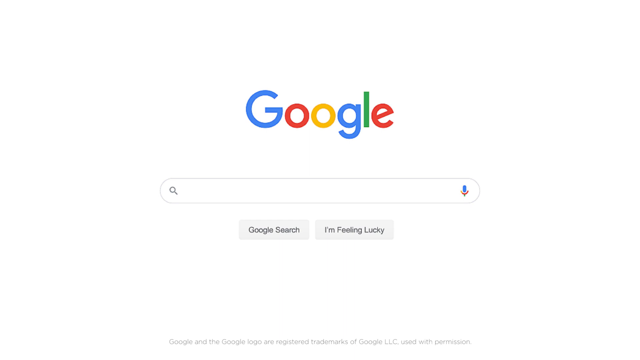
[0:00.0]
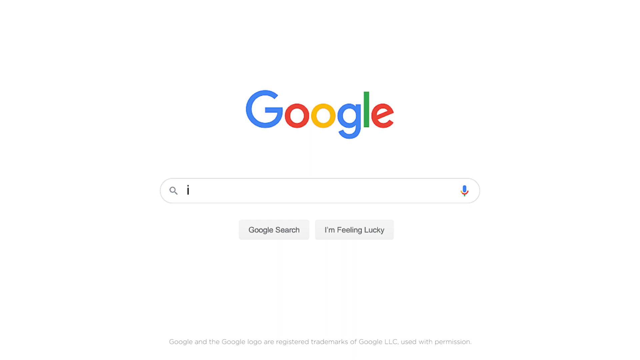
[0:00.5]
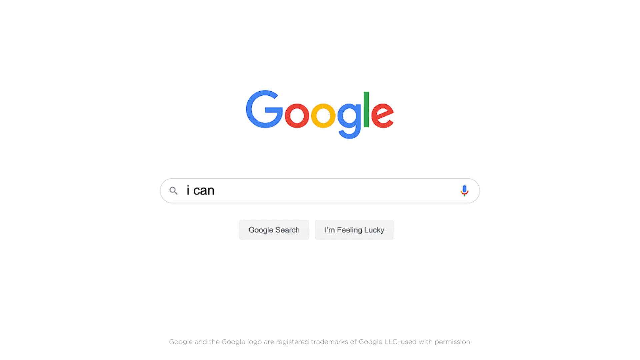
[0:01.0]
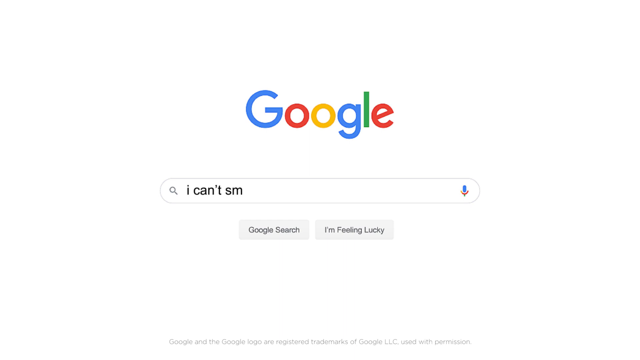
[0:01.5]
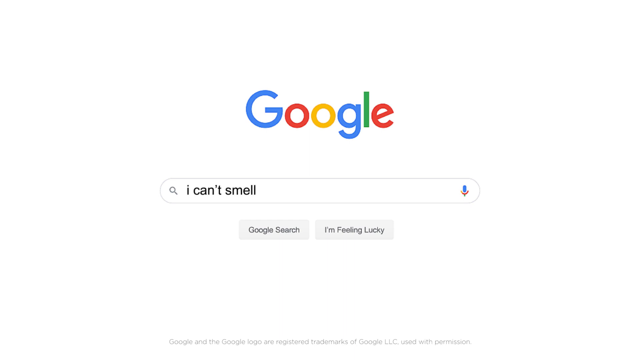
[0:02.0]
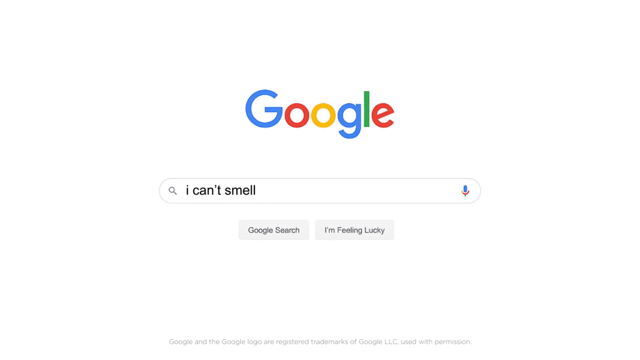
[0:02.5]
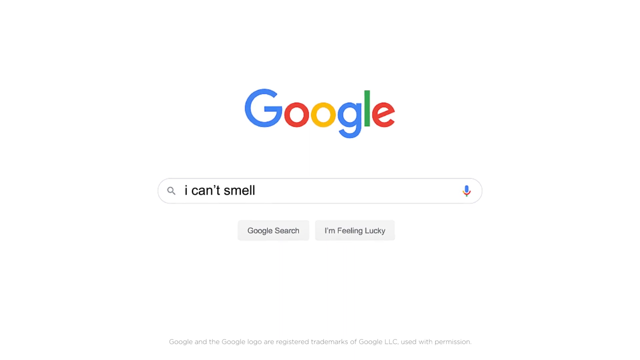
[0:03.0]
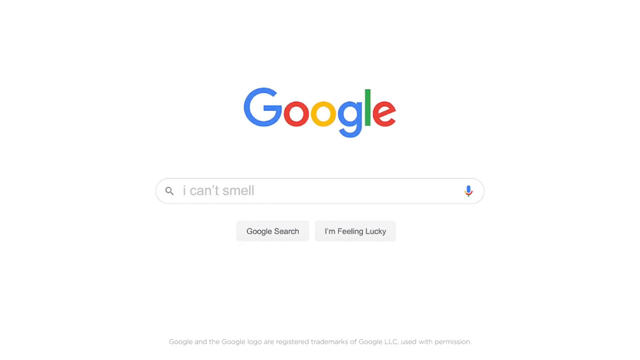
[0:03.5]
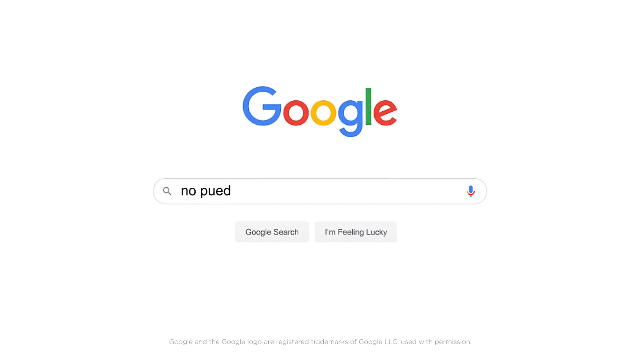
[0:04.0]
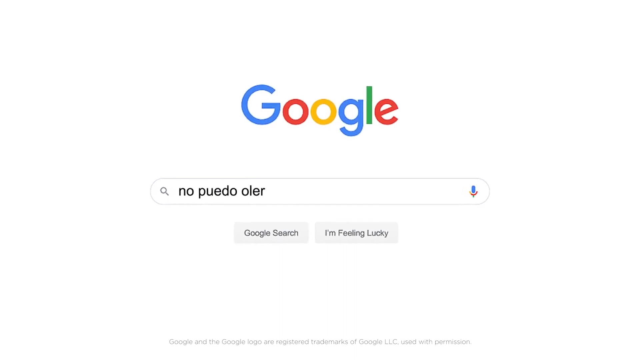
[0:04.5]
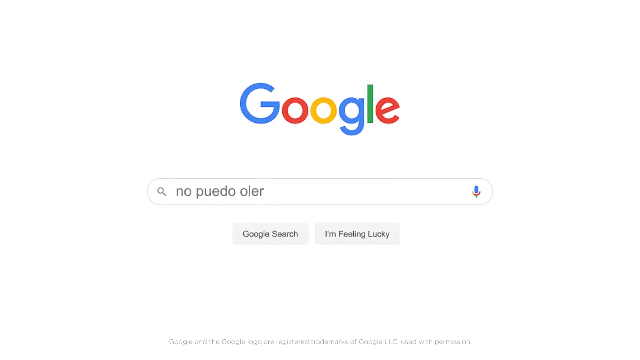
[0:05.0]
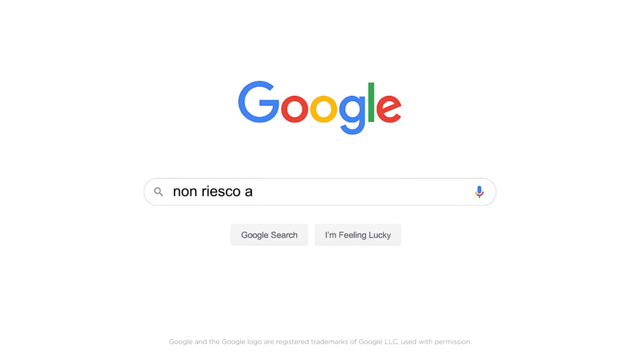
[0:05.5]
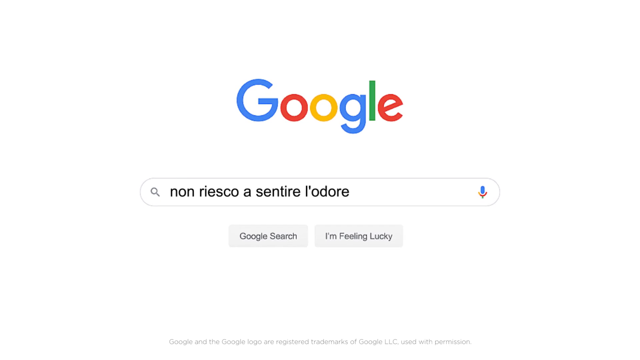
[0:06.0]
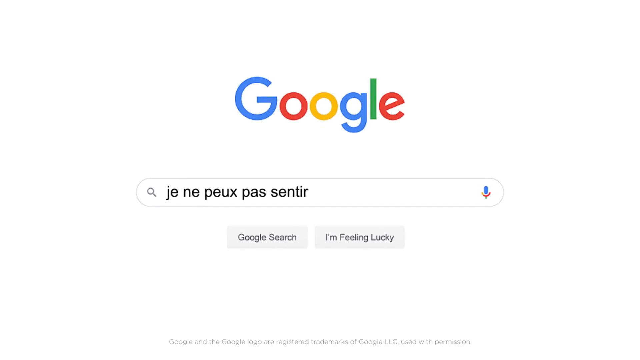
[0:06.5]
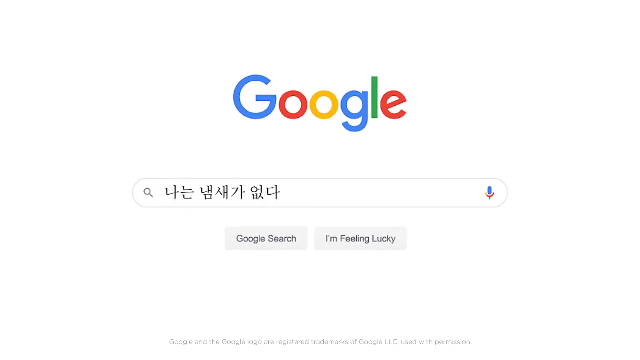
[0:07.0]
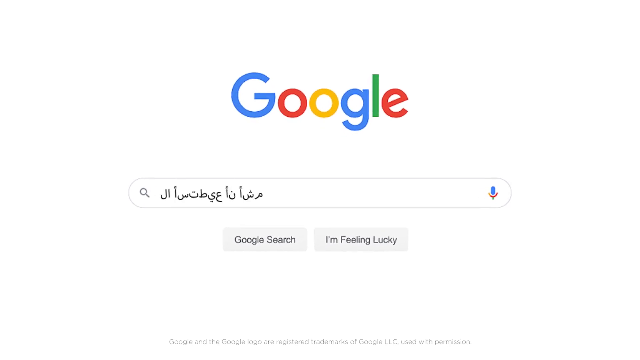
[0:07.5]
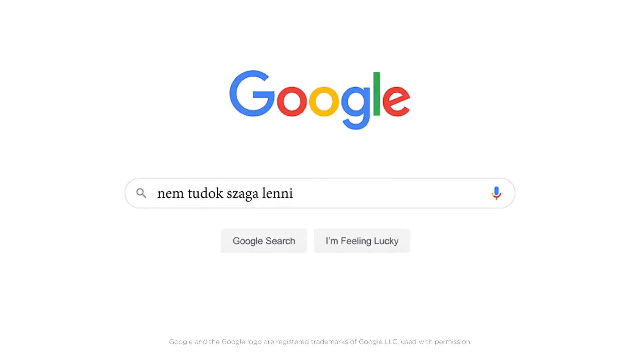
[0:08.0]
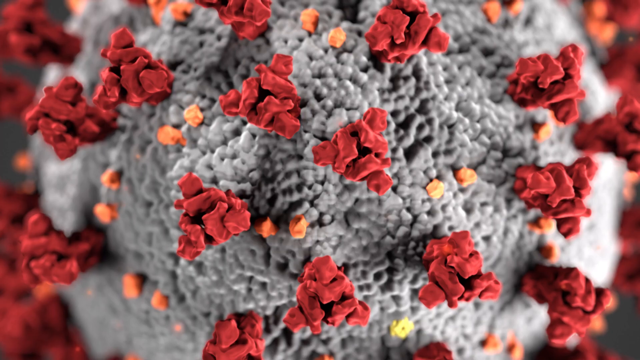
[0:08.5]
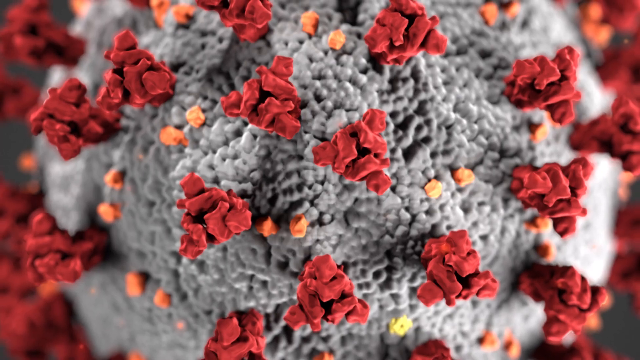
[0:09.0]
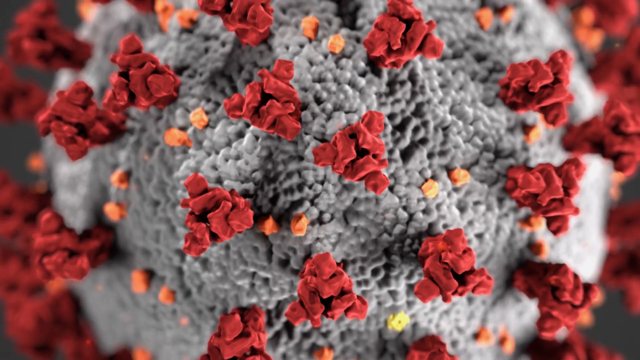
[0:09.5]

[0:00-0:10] A white screen shows the word Google in the middle. The capital G is blue, followed by a small red letter, the small o is yellow, the small g is blue, the small l is green, and the small e is red. Beneath it is a long rectangular search bar with a small magnifying glass on the left side and a small microphone on the right side. Below the bar are two gray buttons: the left one says "Google Search" and the right one says "I'm feeling lucky." The words "I can't smell" are typed into the search bar, then "no puedo oler," then "no riesco a sentir la odor," and then a series of words in other languages flashes by very quickly.